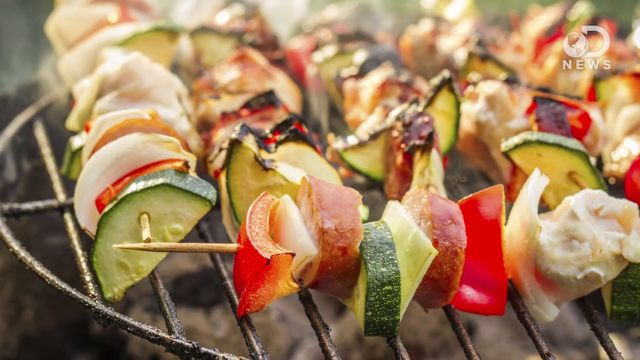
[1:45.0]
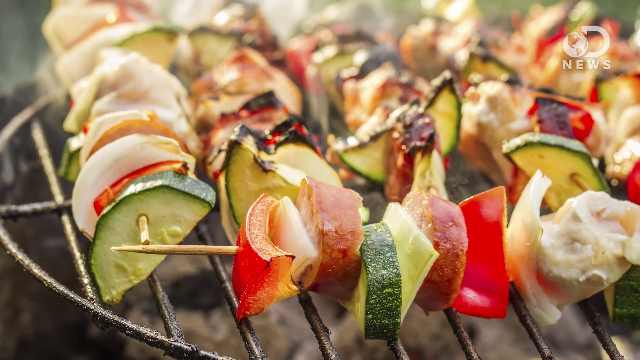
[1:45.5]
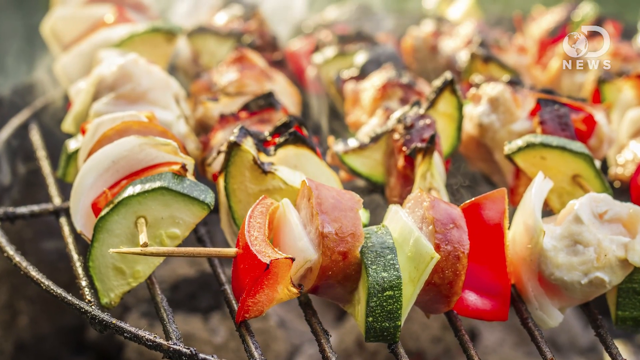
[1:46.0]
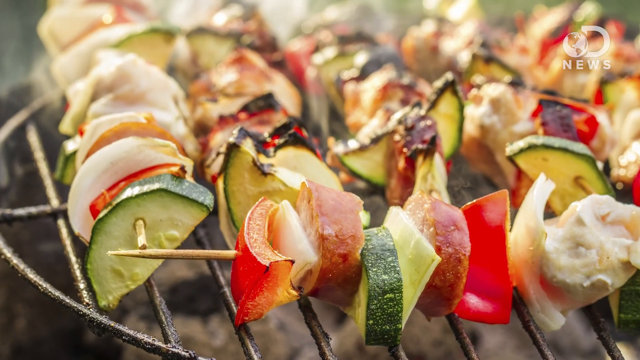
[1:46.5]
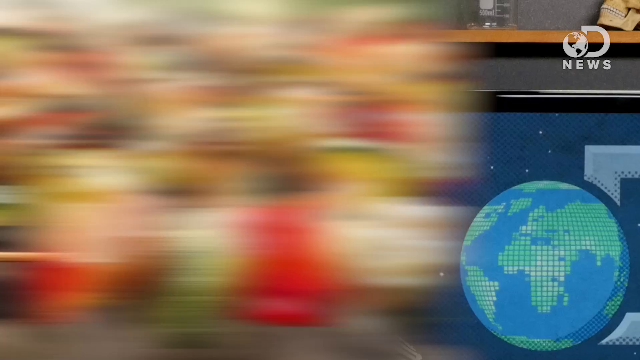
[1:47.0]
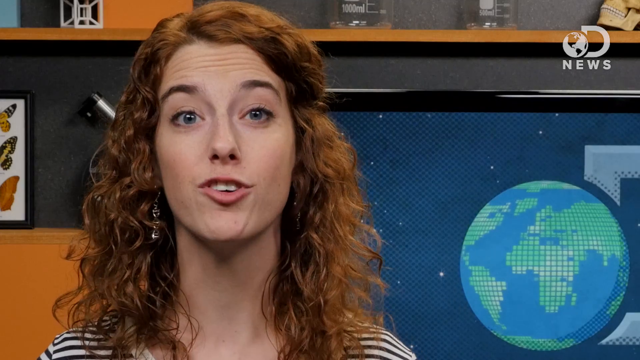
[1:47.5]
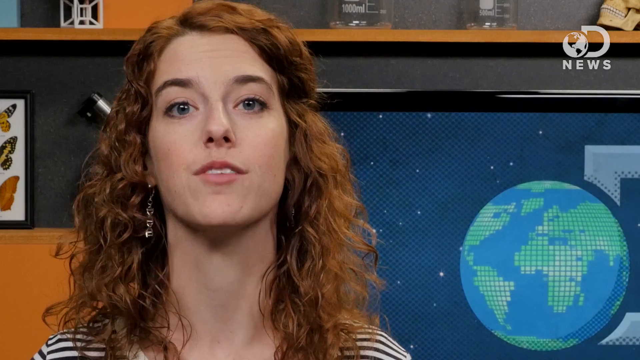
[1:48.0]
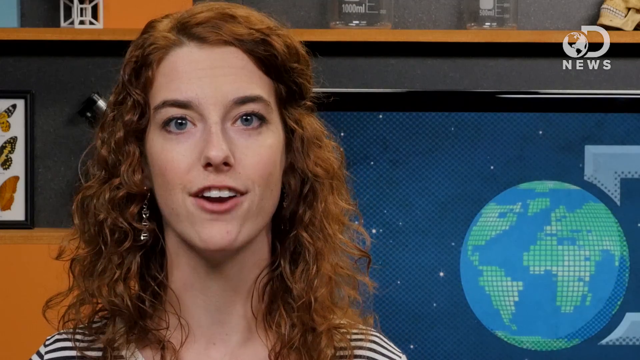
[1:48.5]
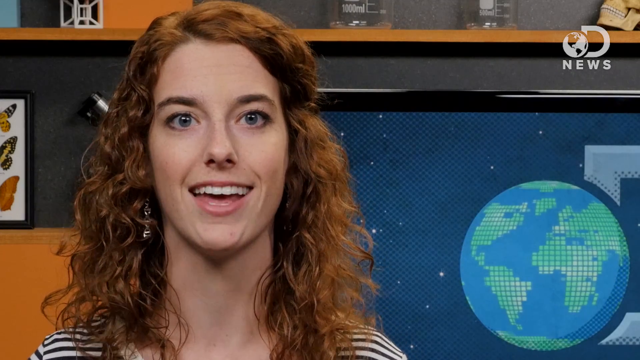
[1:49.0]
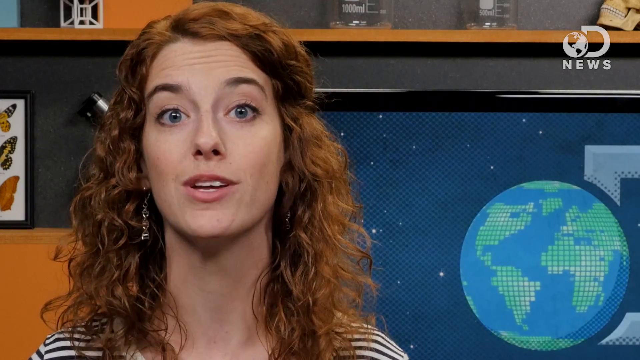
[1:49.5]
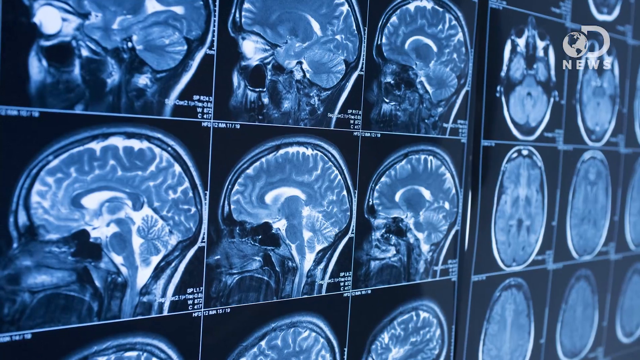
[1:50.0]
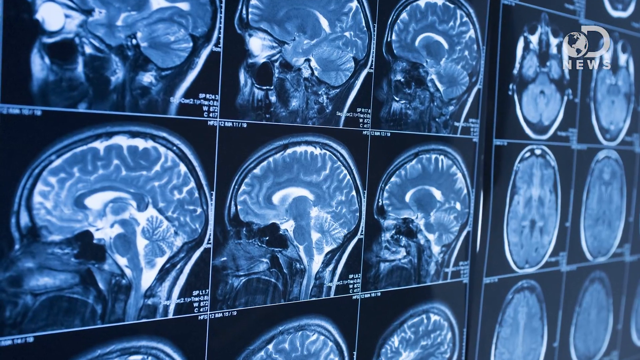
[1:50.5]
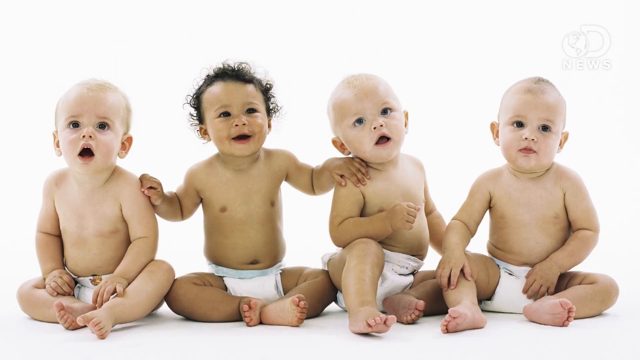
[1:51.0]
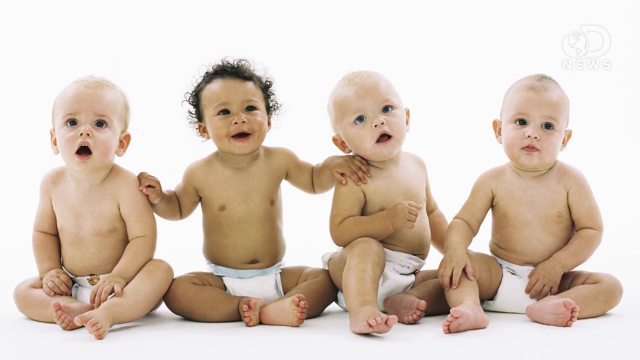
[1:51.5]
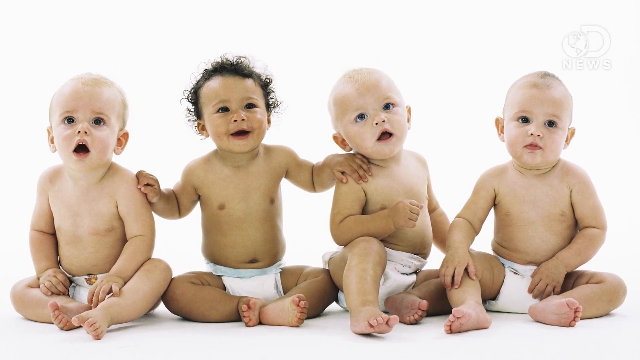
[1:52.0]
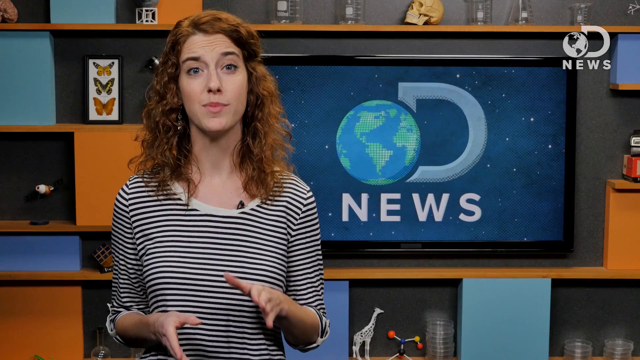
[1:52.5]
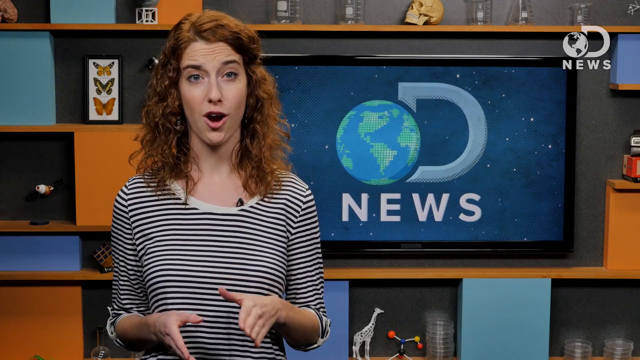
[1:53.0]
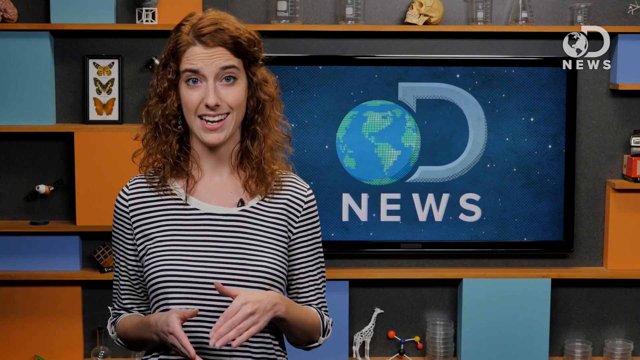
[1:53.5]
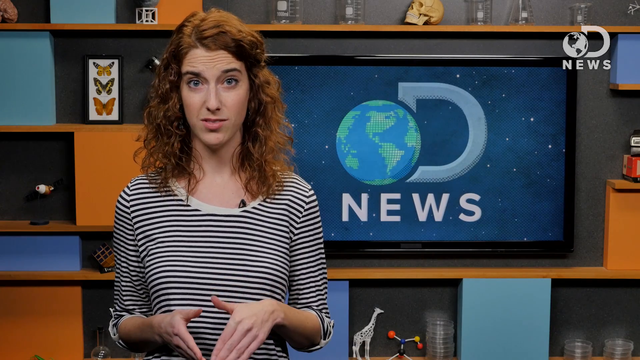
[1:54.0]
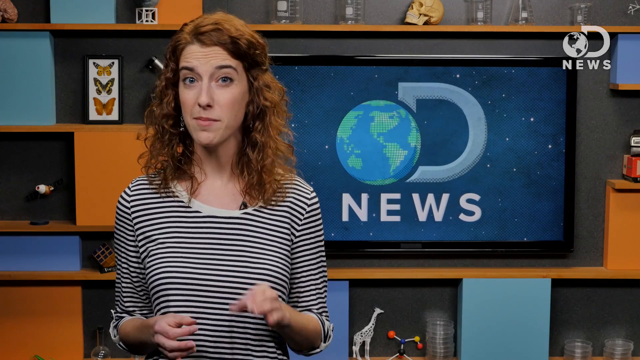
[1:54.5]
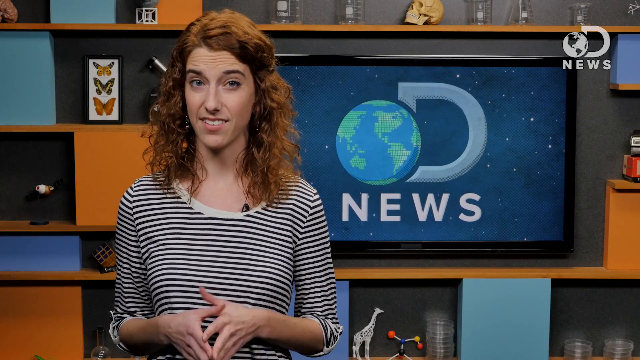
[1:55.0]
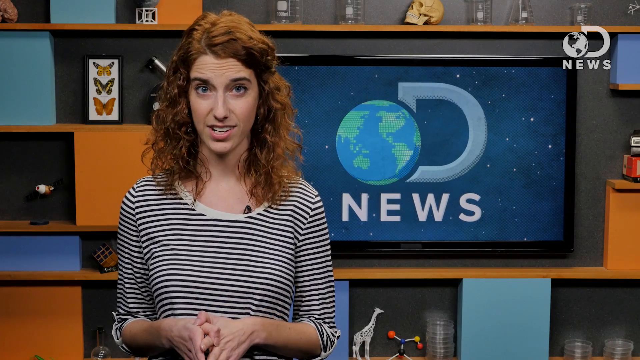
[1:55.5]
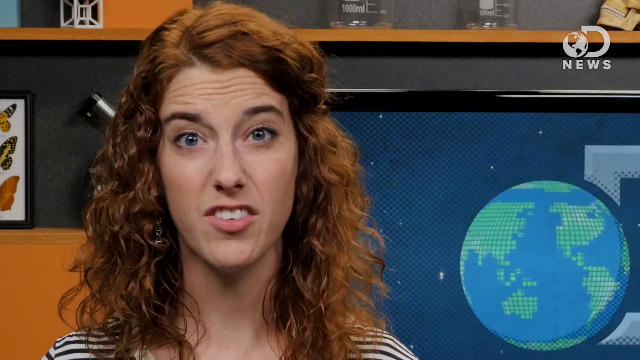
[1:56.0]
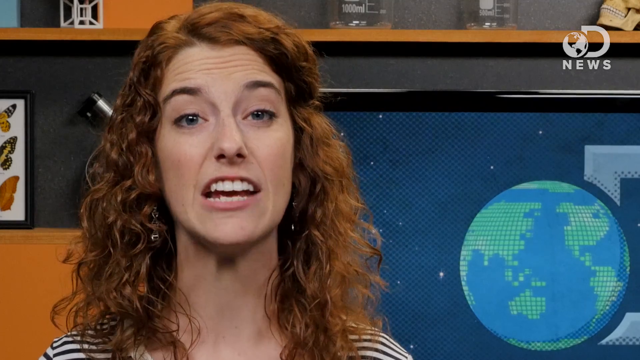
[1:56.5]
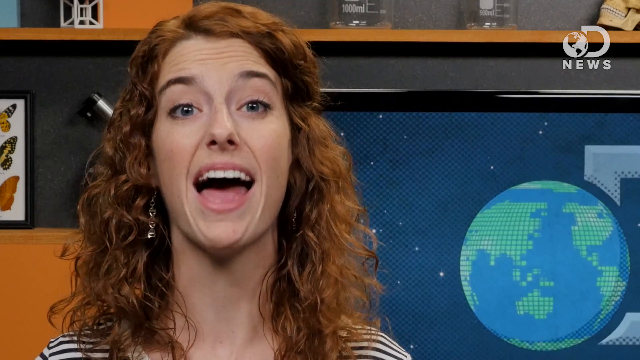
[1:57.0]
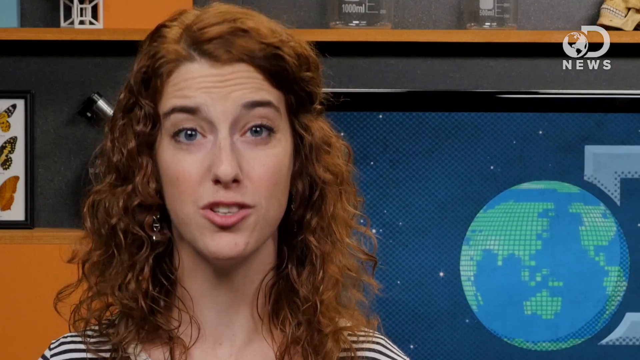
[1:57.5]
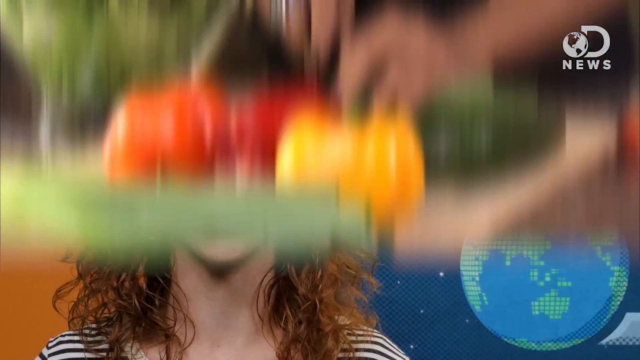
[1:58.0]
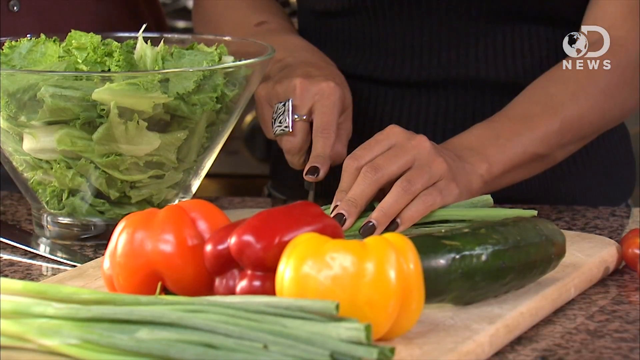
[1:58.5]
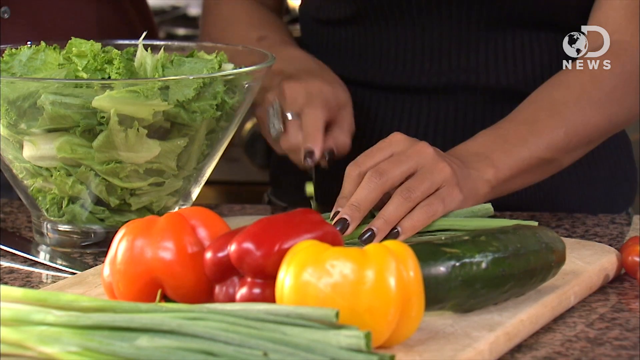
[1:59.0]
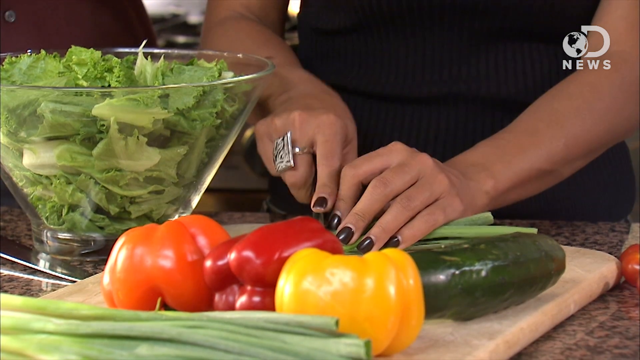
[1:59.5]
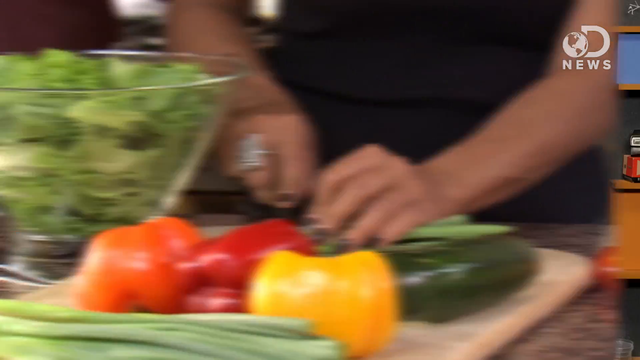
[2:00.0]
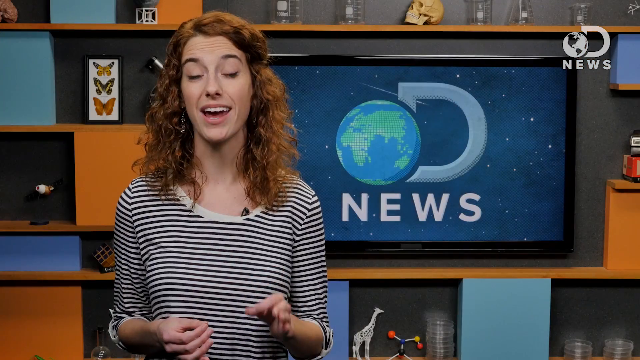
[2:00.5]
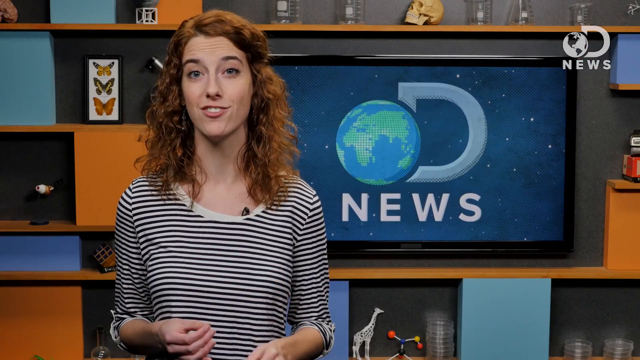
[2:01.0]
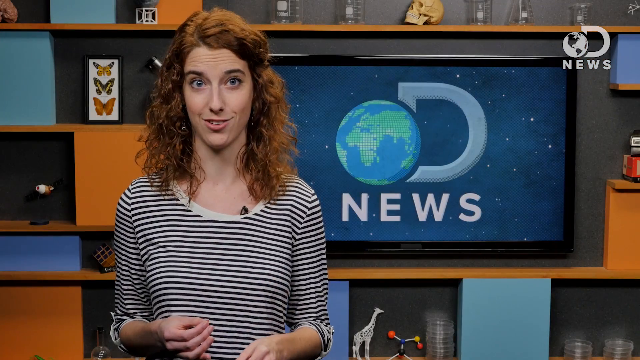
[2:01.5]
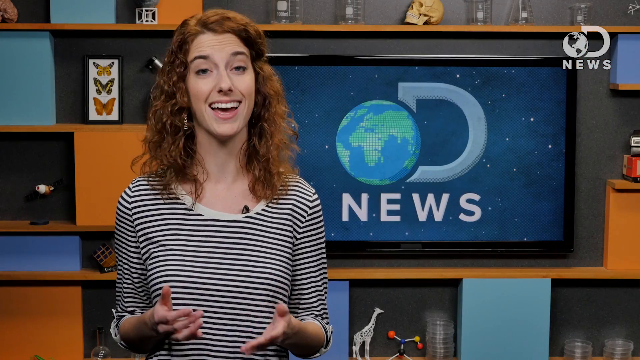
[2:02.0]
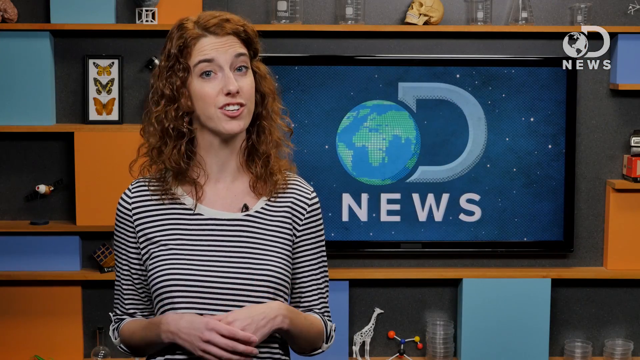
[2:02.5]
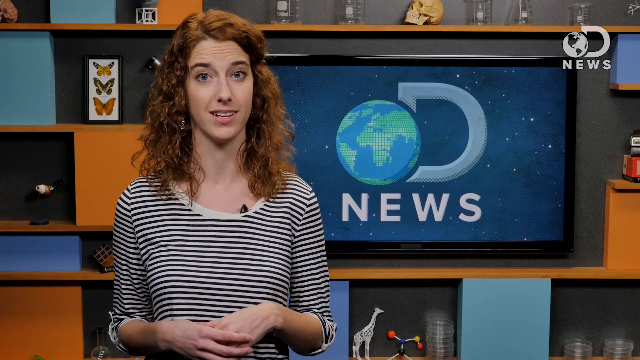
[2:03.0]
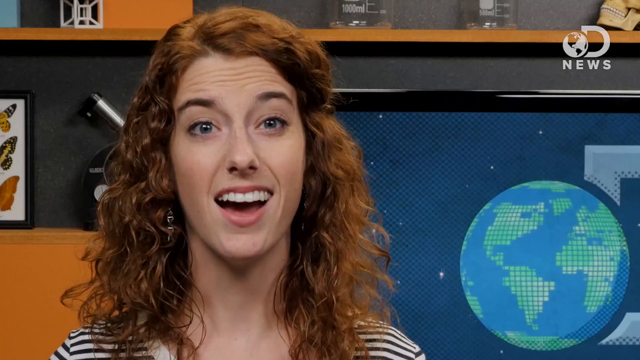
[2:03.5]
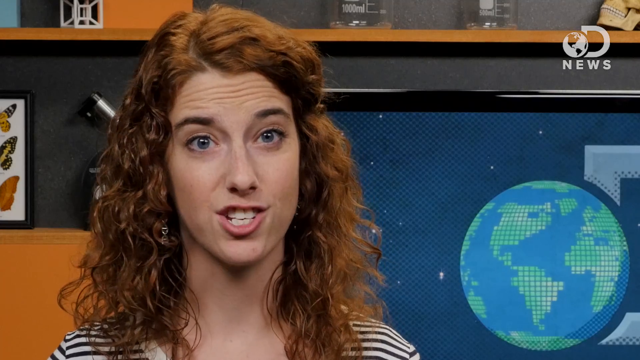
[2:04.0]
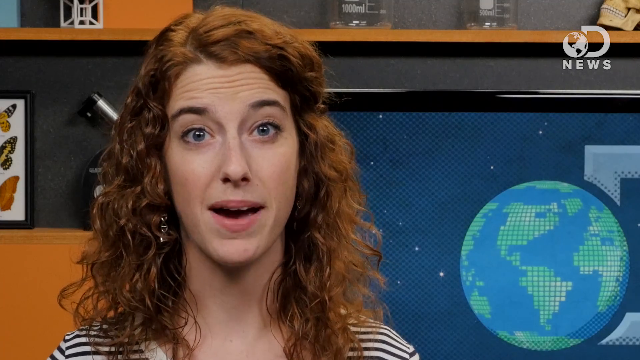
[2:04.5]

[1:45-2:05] Kebabs are on a grill, with what looks to be tomatoes, cucumber, onion and something else that cannot be made out. Then a brain scan of people's brains appears, followed by four babies. The video returns to the red-haired woman, the newscaster or person presenting the story, speaking. A woman chops up what seems like green onion with a yellow, a red and apparently an orange bell pepper, three bell peppers in all, plus a piece of cucumber and a bowl of lettuce. The video goes back to the red-haired woman, then shows the kebabs on the grill, the brain scans, the four babies, and the woman speaking again. The woman chopping vegetables on a cutting board with the bell peppers, lettuce and cucumber appears again, then the kebabs, the woman, the brain scans, the babies, and the woman talking, and it keeps repeating.